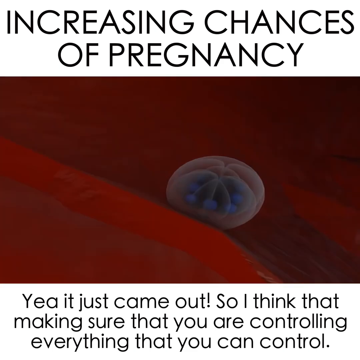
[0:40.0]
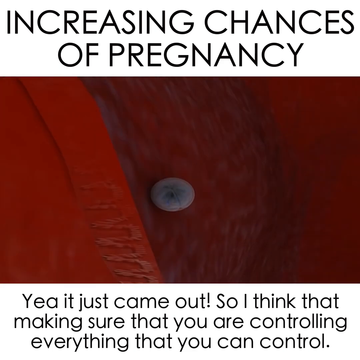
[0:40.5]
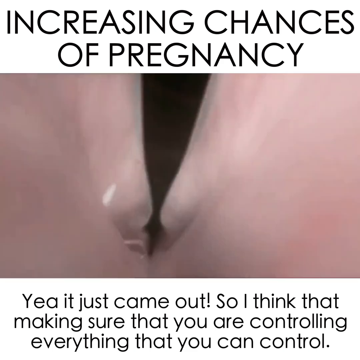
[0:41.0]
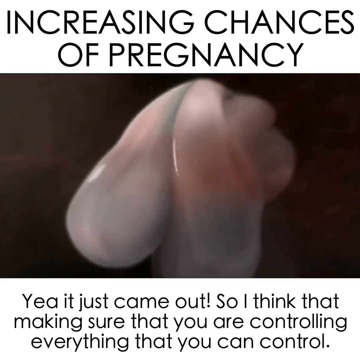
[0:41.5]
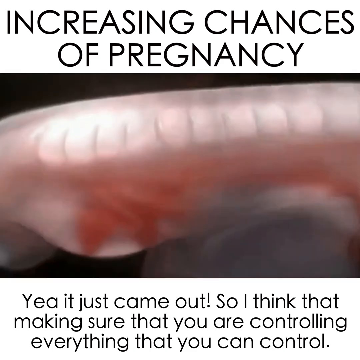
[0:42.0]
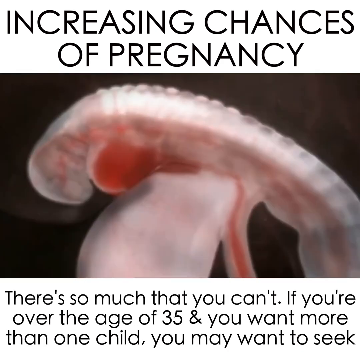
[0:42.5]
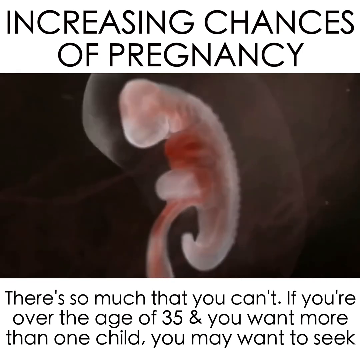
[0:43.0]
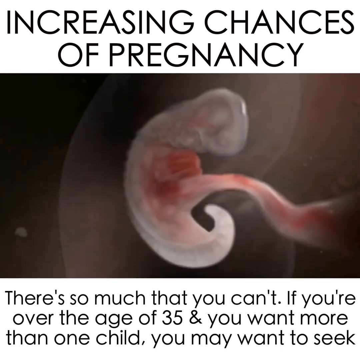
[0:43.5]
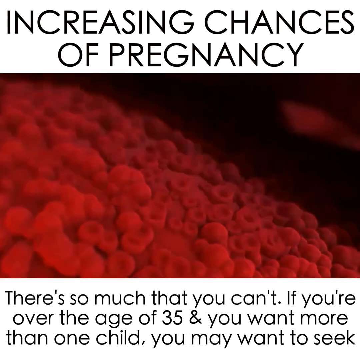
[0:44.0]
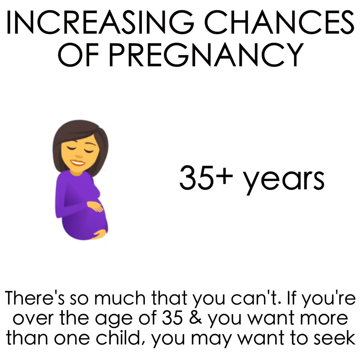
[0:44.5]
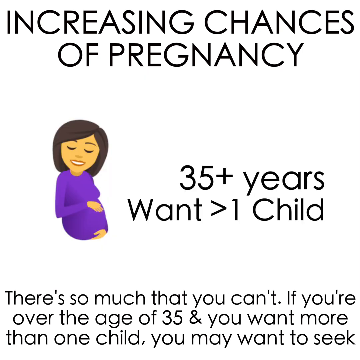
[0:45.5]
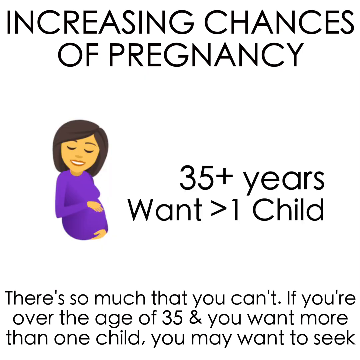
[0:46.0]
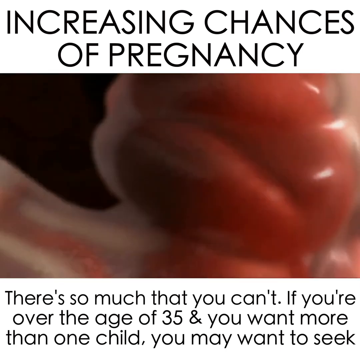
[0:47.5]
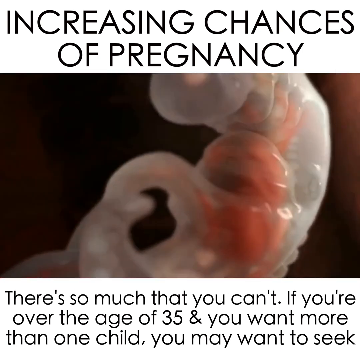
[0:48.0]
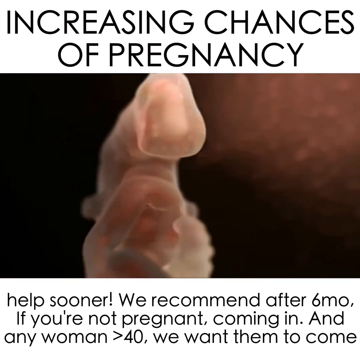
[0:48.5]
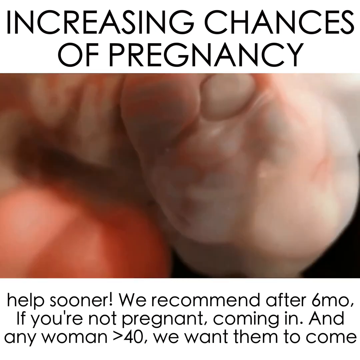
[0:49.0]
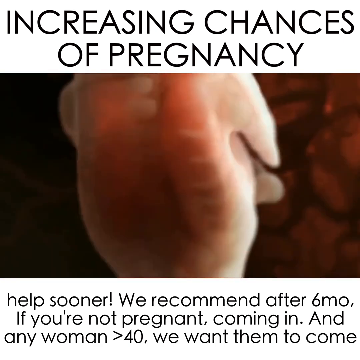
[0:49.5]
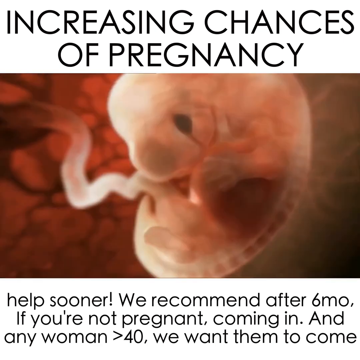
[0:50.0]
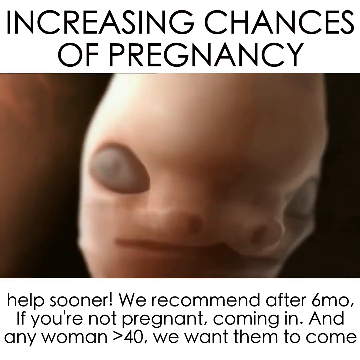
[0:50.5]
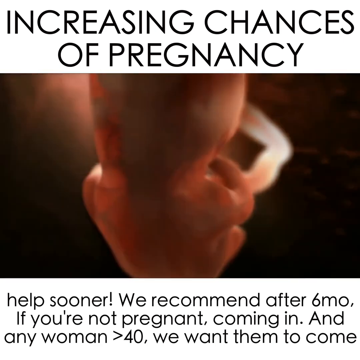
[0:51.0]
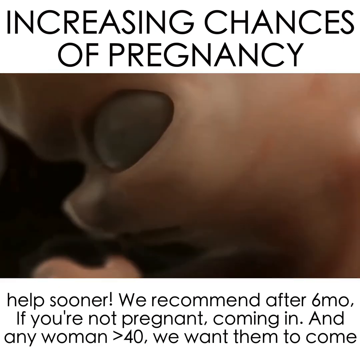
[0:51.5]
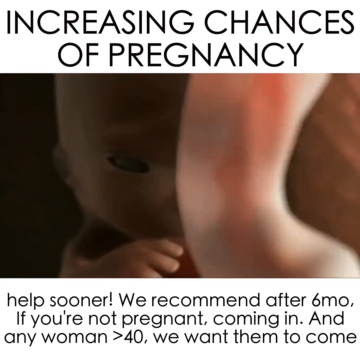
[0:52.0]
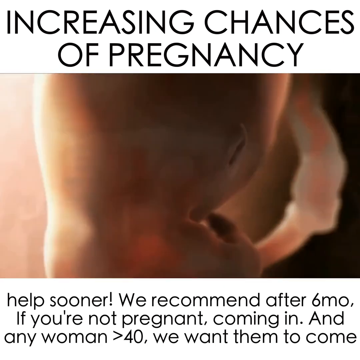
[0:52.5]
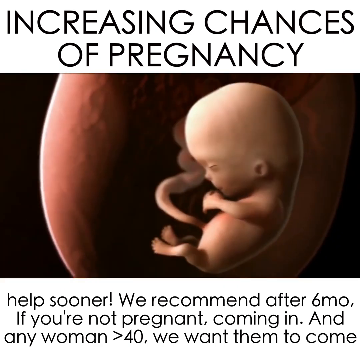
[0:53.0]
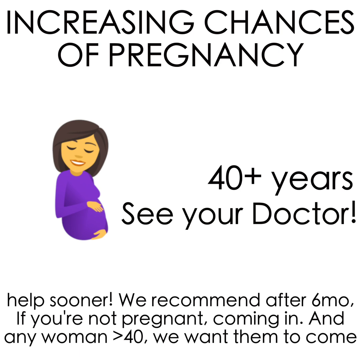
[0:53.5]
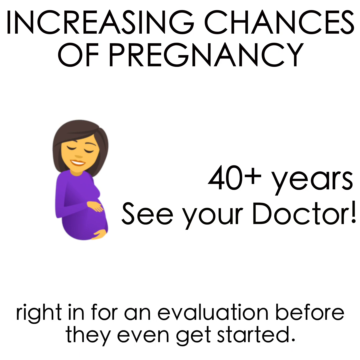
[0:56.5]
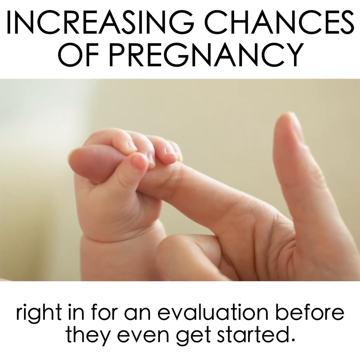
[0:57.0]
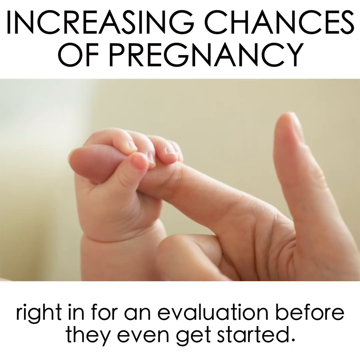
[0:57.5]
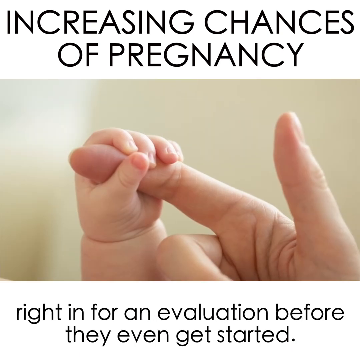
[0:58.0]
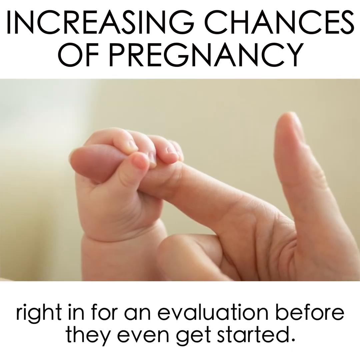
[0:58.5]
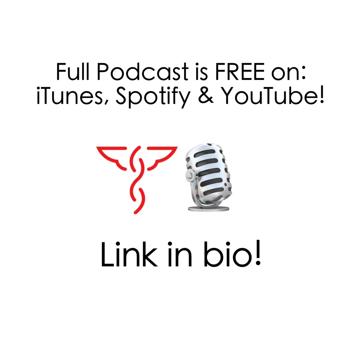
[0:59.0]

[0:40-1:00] The ovulation animation continues, followed by a graphic reading "If you're over the age of 35 and you want more than one child, you may want to seek," with a pregnant lady and the text "35 years plus" and "help sooner." Next, text reads "we recommend after six months if you're not pregnant coming in," and a graphic shows "40 plus years. See your doctor," with text reading "we want to come right in for an evaluation before they even get." A picture shows a person's finger with a little baby hand clinging onto it. The final screen reads "Podcast is free on iTunes, Spotify and YouTube," with a little microphone and an unidentified icon that seems related to the medical field.